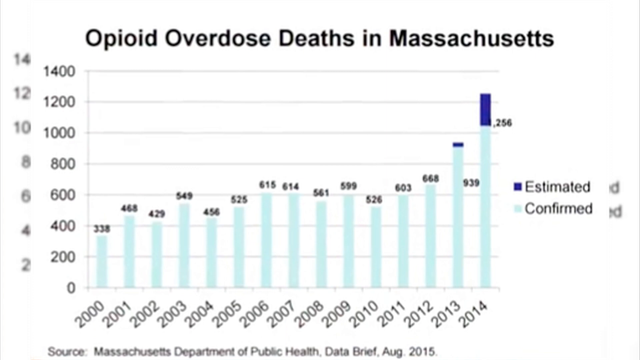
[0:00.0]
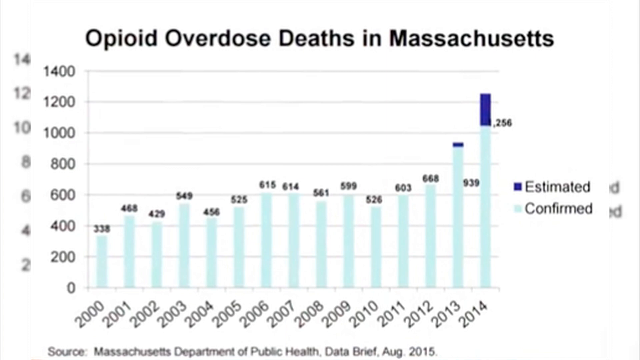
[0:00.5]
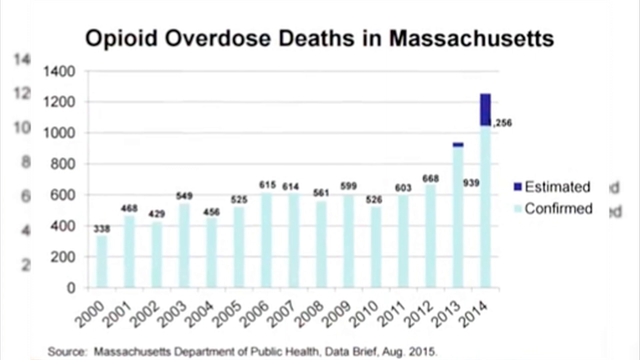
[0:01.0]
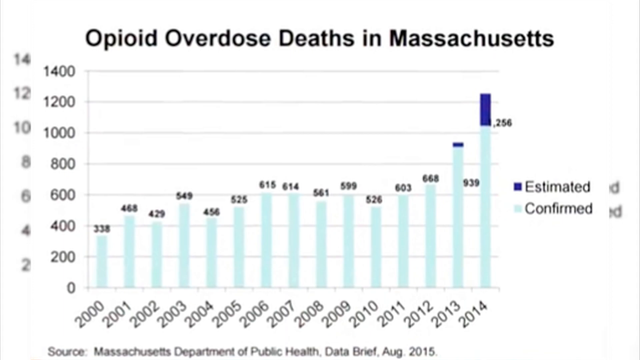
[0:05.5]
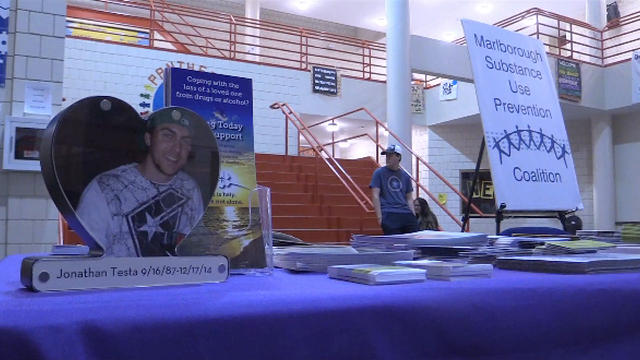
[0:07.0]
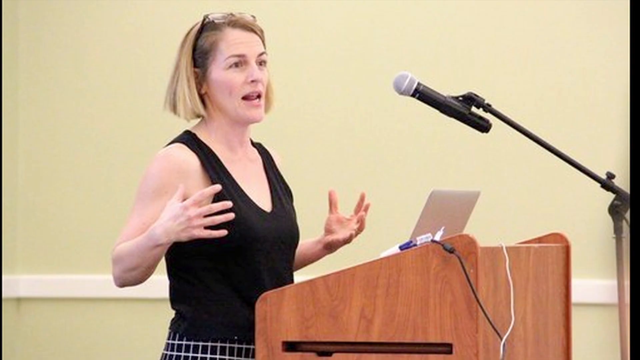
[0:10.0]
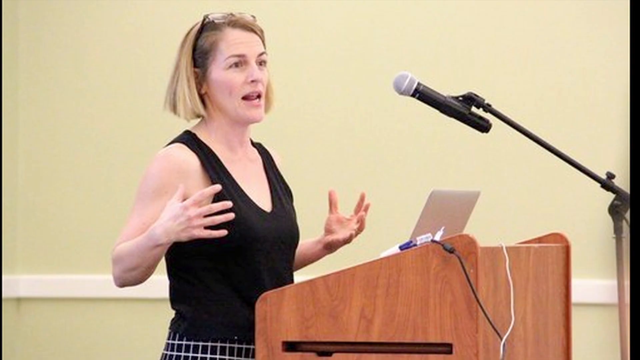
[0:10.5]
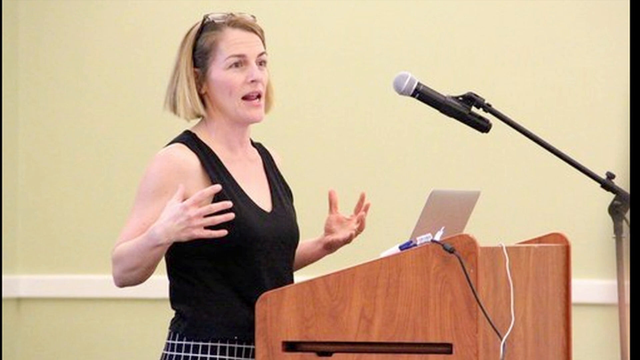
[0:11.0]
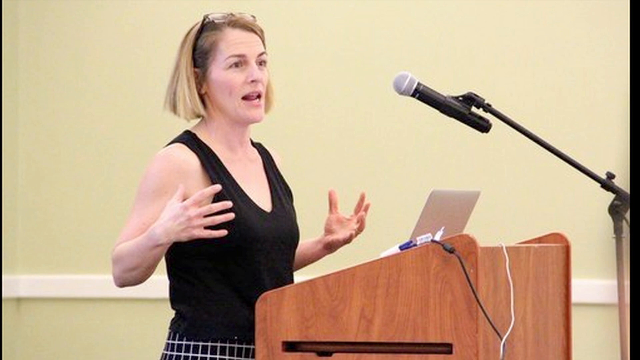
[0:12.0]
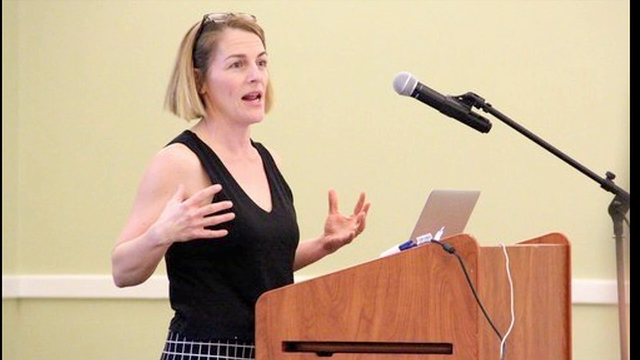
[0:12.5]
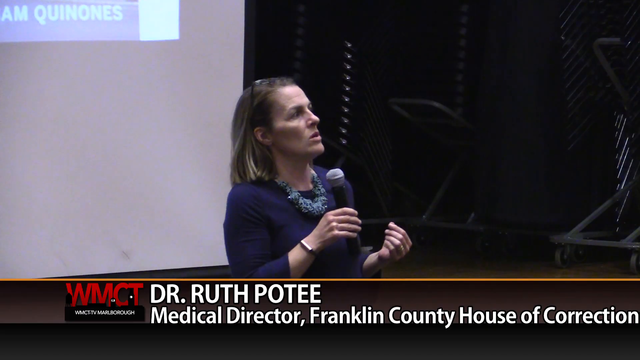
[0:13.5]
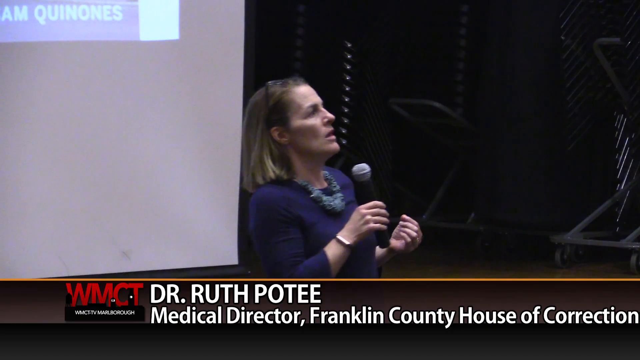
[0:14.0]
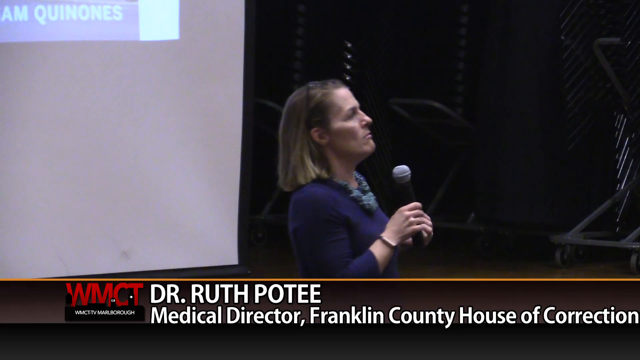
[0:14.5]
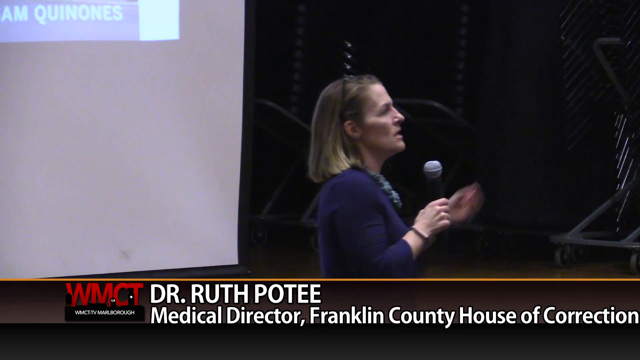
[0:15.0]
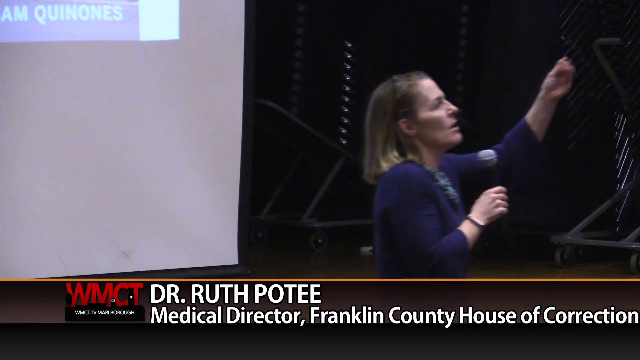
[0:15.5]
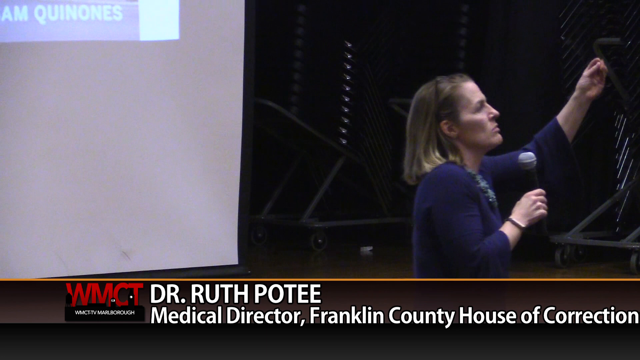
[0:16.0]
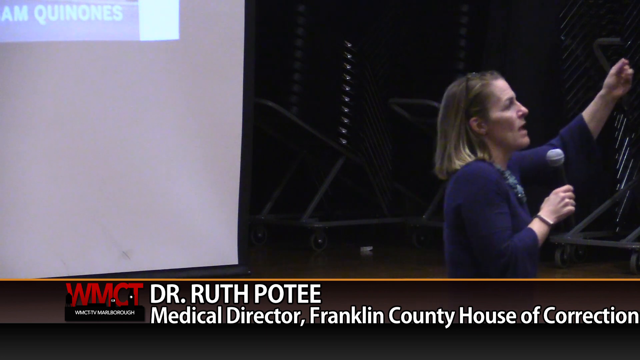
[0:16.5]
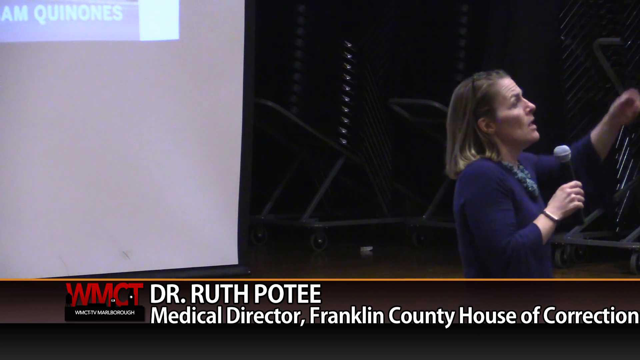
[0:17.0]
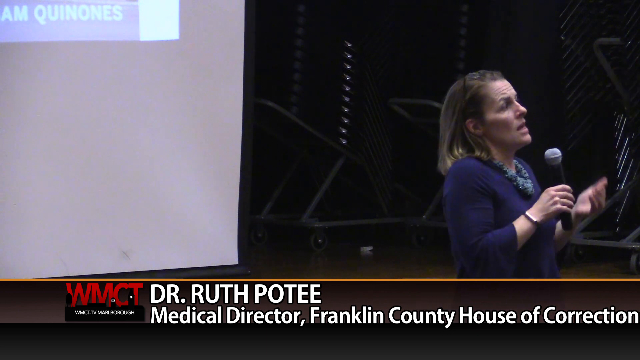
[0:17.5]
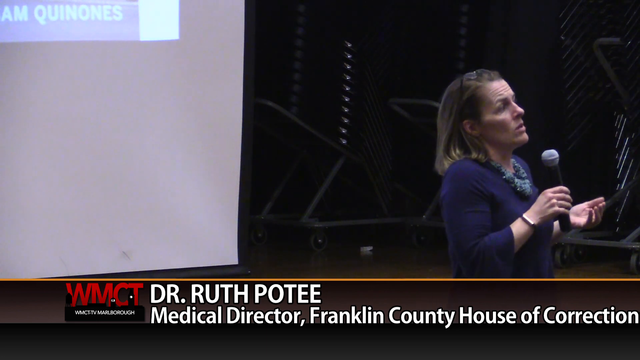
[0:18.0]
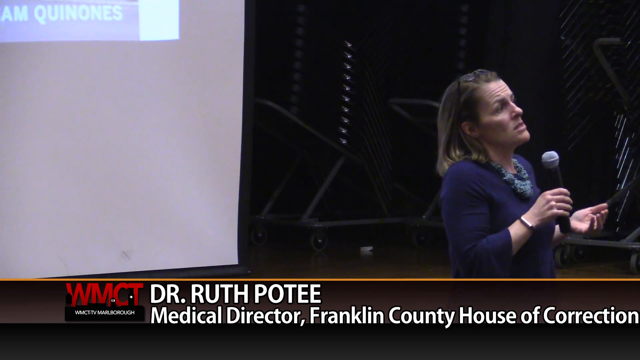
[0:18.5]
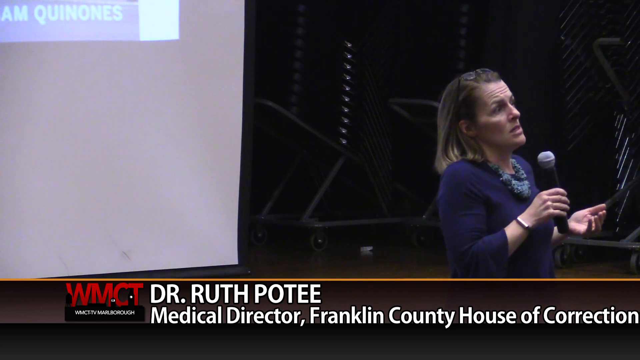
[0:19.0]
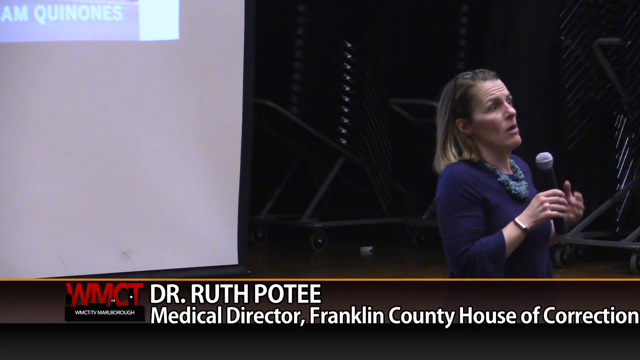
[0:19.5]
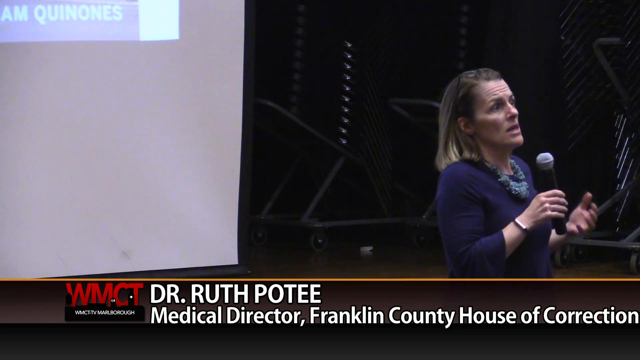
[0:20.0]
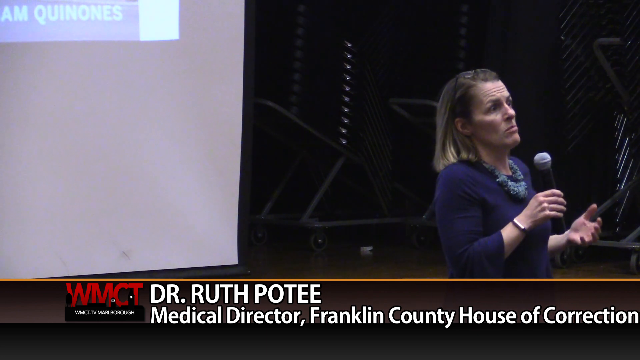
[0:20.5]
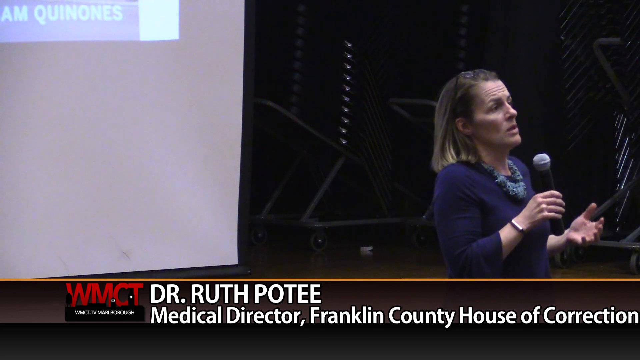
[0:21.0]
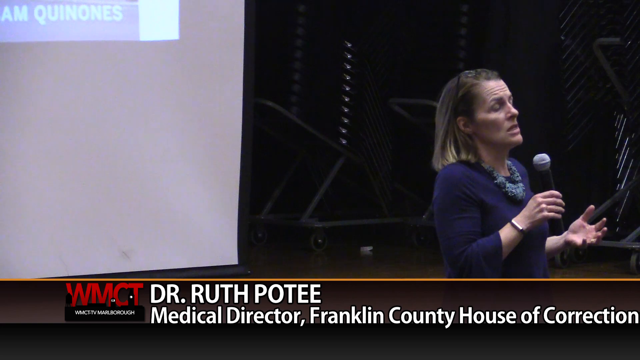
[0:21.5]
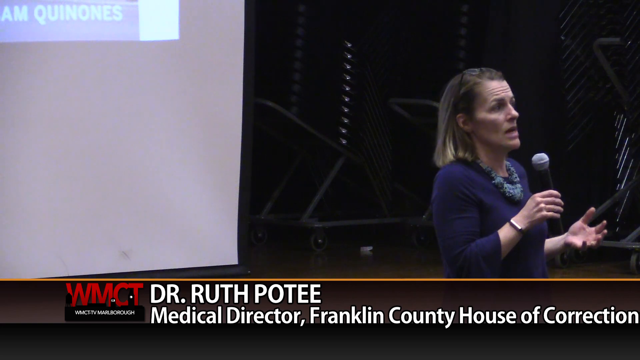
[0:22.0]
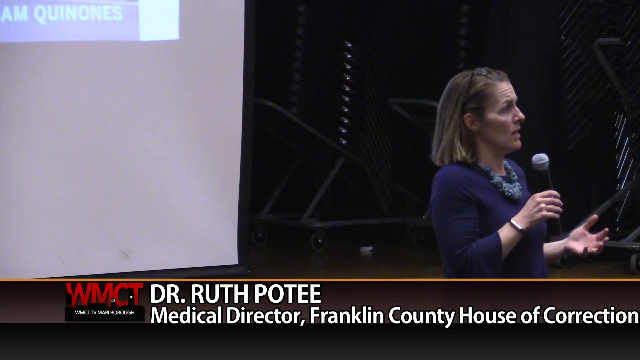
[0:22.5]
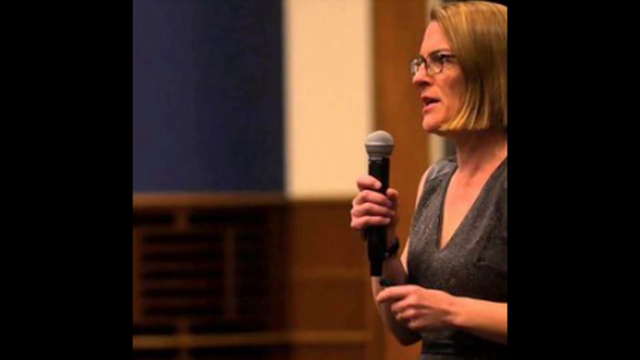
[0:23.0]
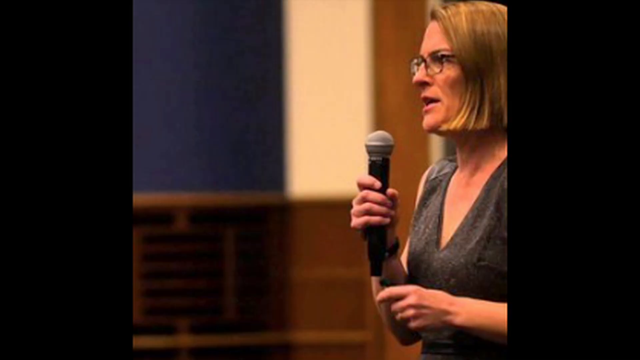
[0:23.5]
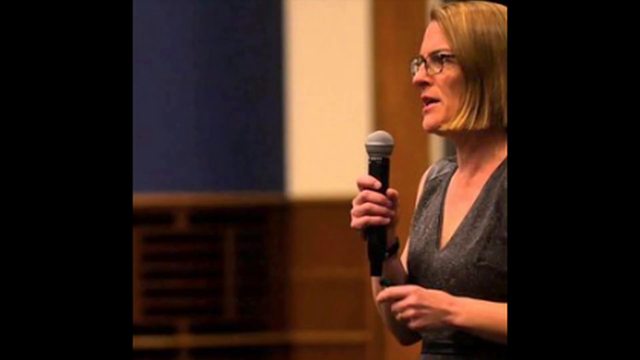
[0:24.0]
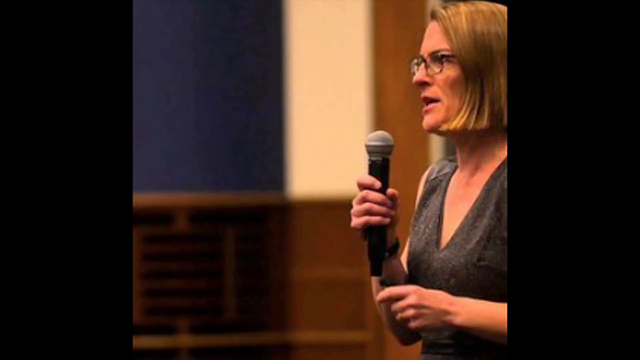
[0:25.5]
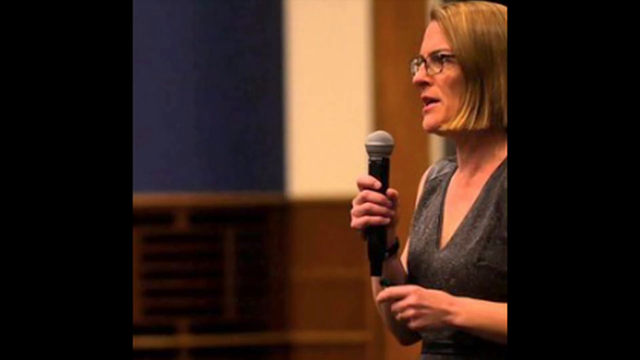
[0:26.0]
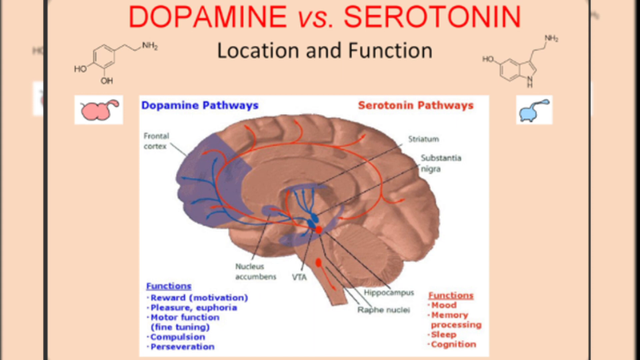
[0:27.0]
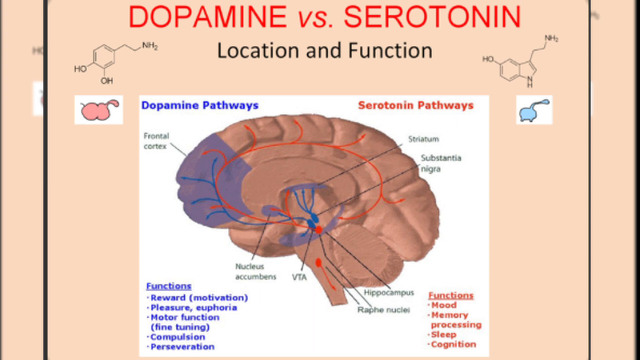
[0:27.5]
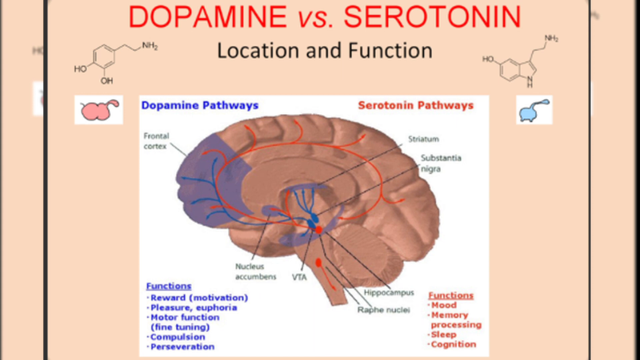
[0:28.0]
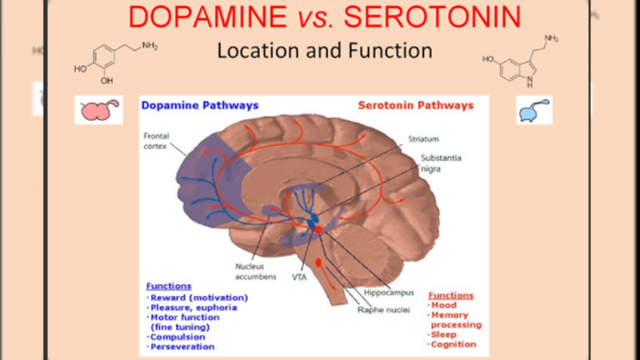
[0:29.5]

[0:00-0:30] The video opens on a bar chart of opioid overdose deaths in Massachusetts. The x-axis runs from the year 2000 to 2014. The left axis shows opioid overdose deaths, with an unclear unit, ranging from 0 to 1400. Light blue marks confirmed deaths and dark blue marks estimated deaths, and the dark blue is just slightly above the light blue throughout the chart. The video cuts to a high school lobby showing a picture of a person with their birth and death years. It then cuts to a still image of a woman at a pedestal giving a speech, before cutting to live footage of Dr. Ruth Potee talking during some sort of seminar. The video then cuts back to the still image of the woman.